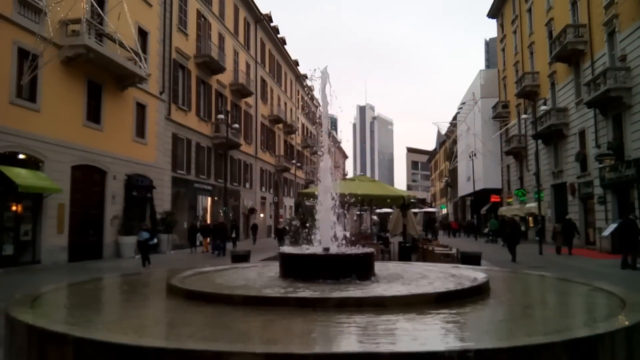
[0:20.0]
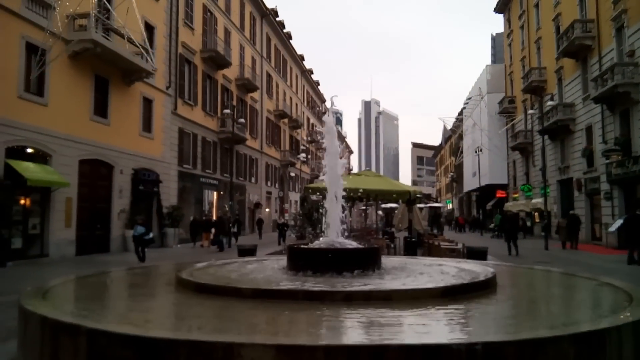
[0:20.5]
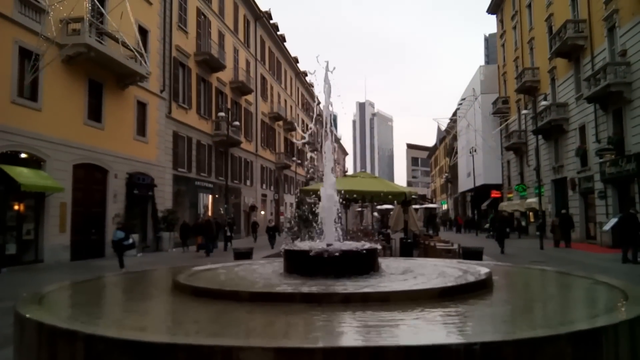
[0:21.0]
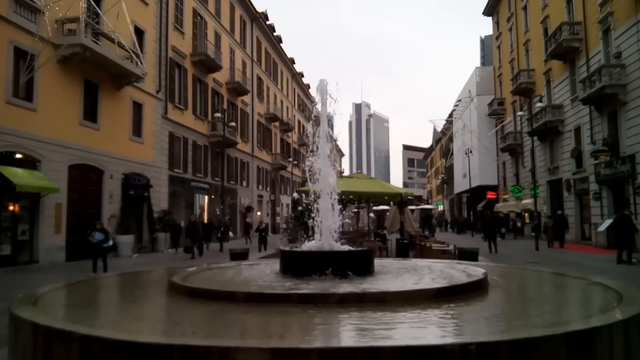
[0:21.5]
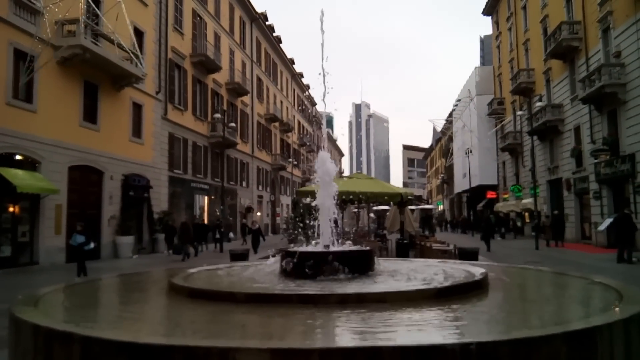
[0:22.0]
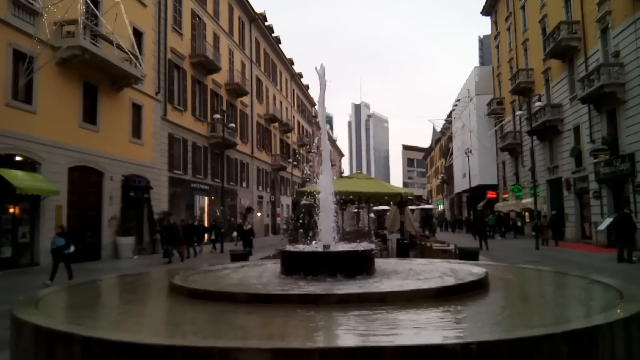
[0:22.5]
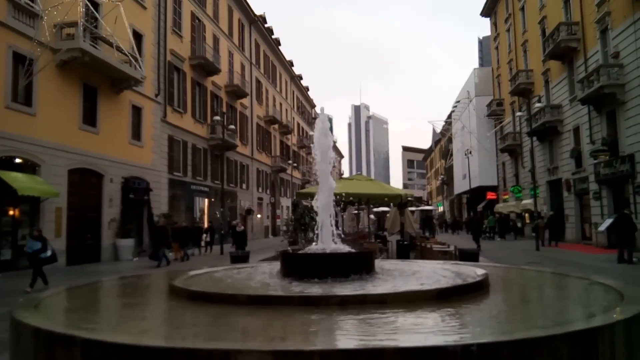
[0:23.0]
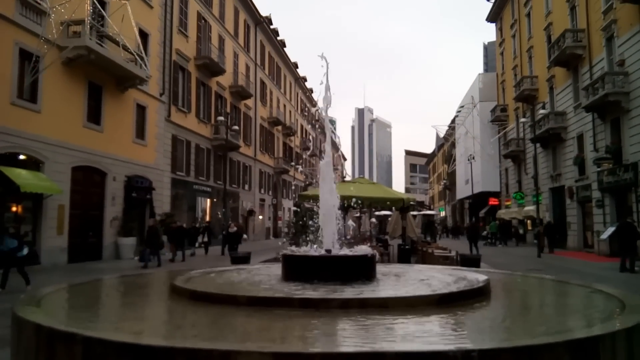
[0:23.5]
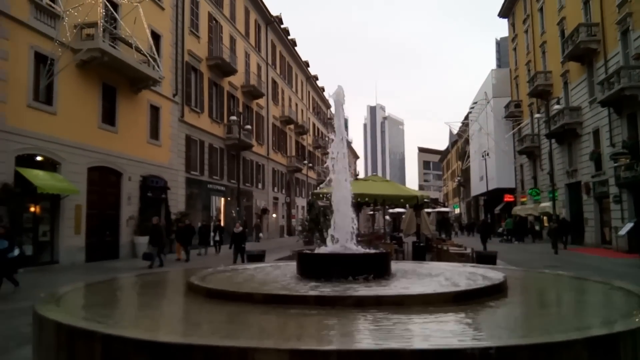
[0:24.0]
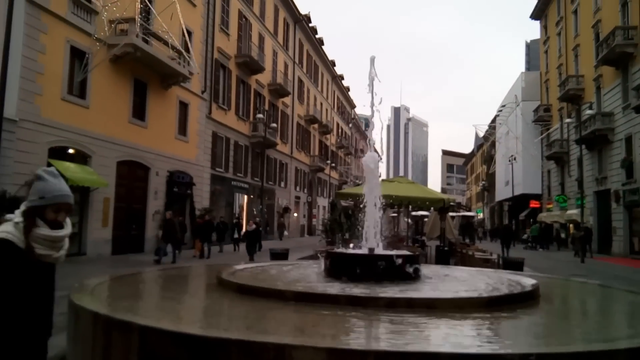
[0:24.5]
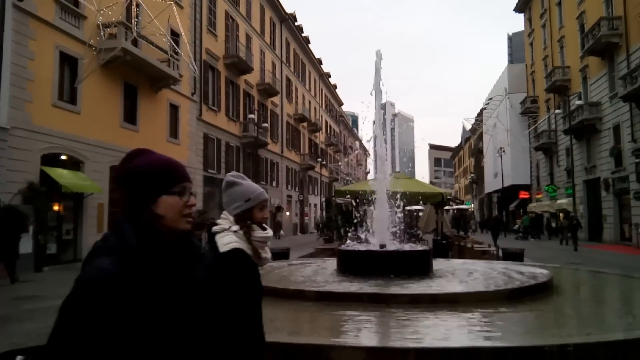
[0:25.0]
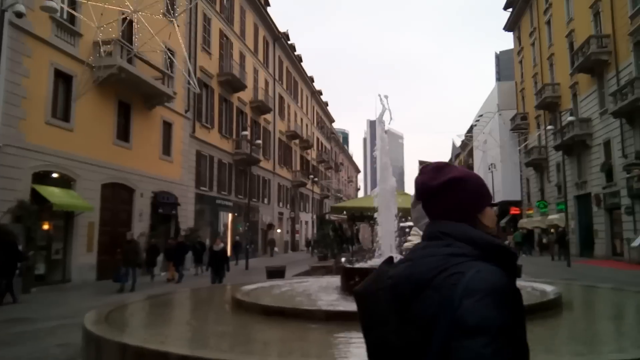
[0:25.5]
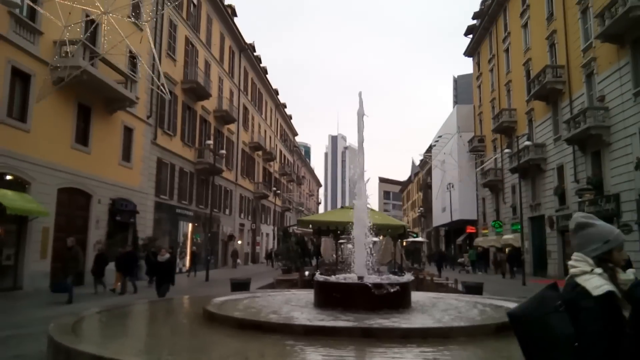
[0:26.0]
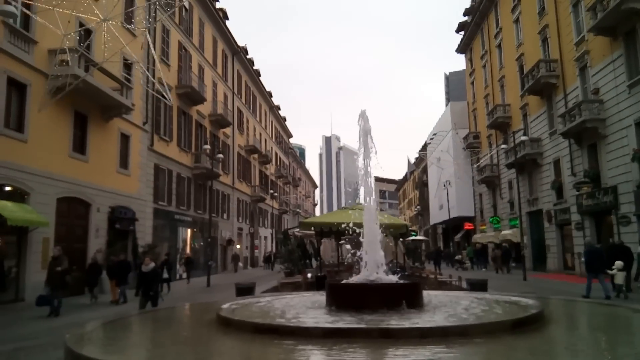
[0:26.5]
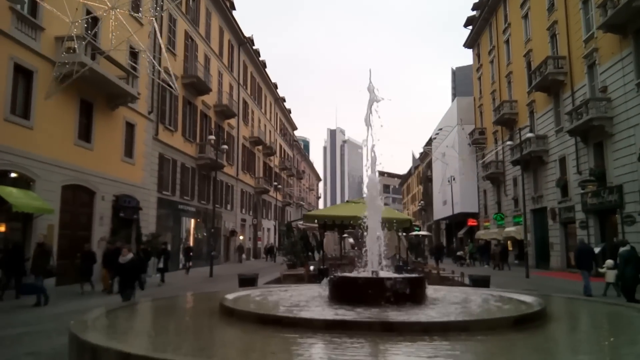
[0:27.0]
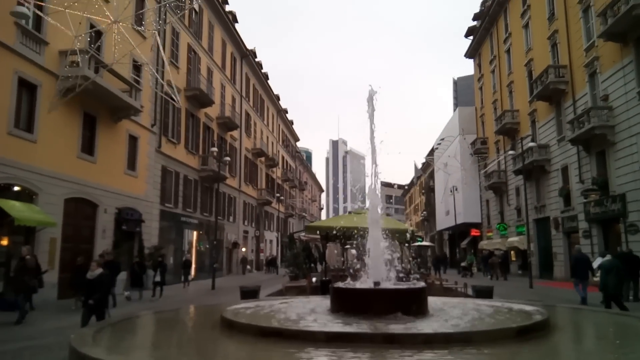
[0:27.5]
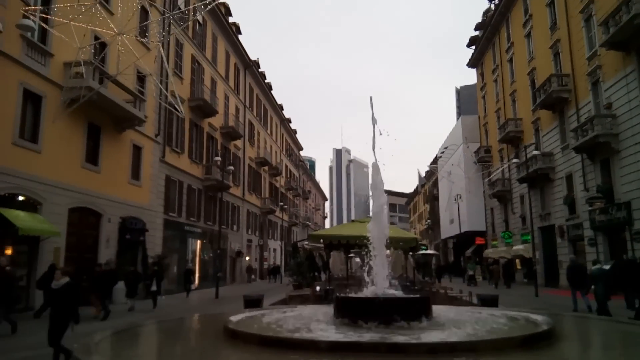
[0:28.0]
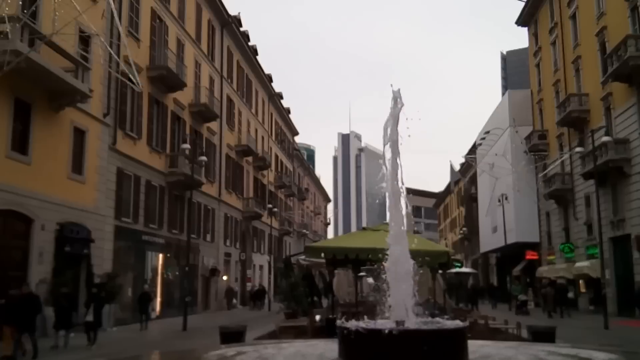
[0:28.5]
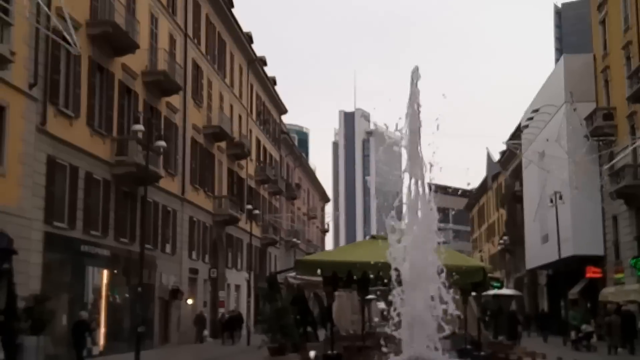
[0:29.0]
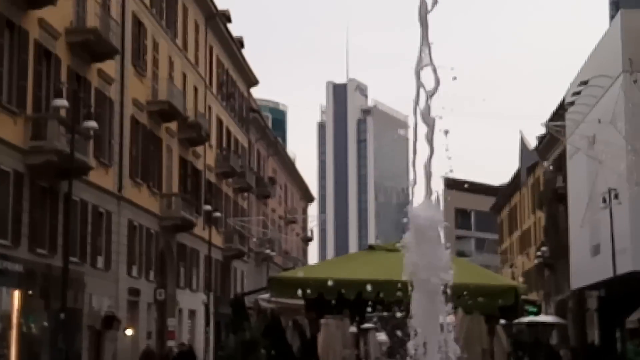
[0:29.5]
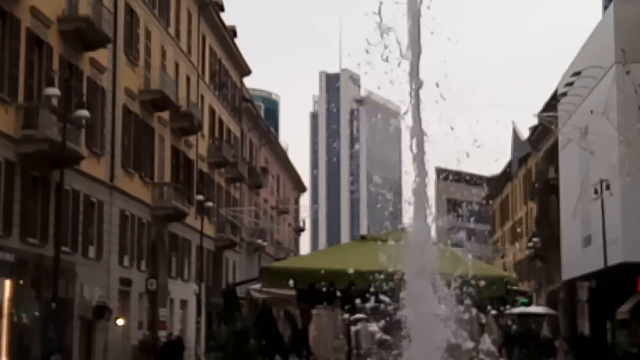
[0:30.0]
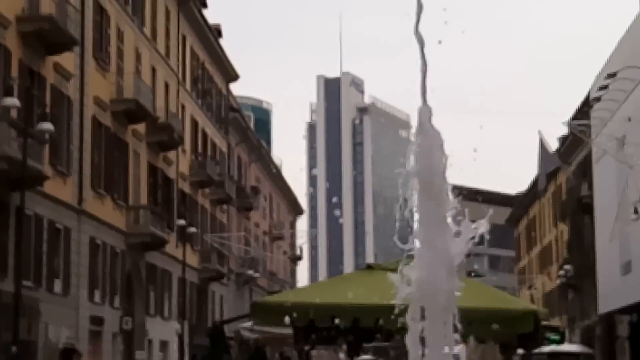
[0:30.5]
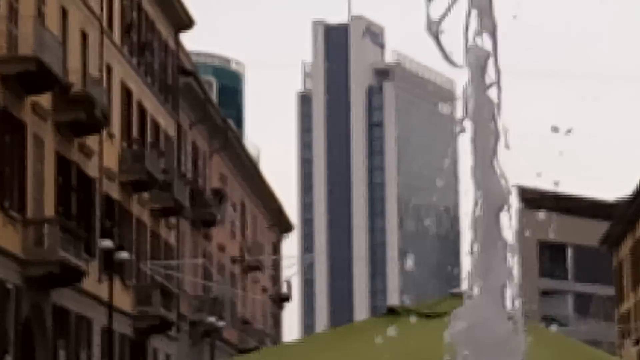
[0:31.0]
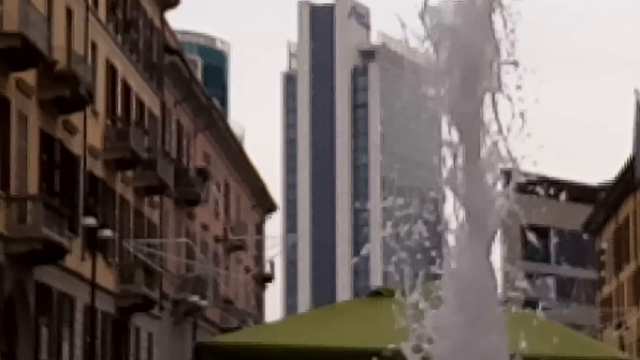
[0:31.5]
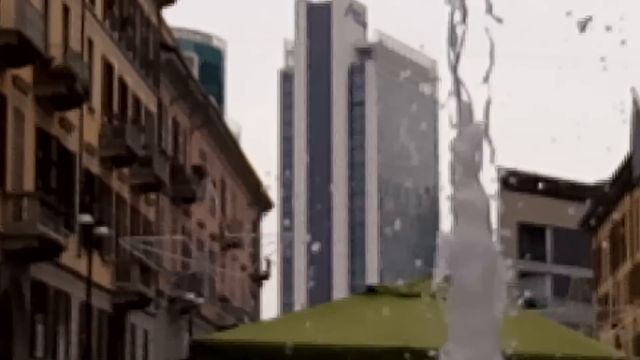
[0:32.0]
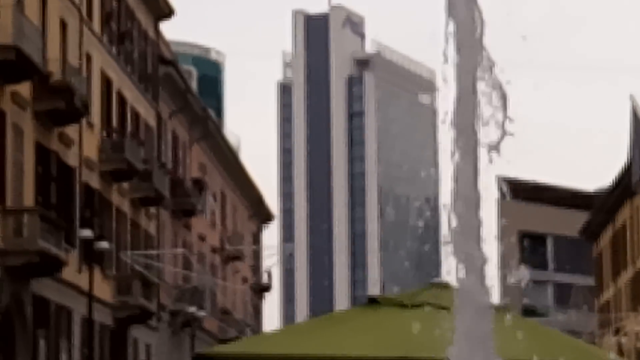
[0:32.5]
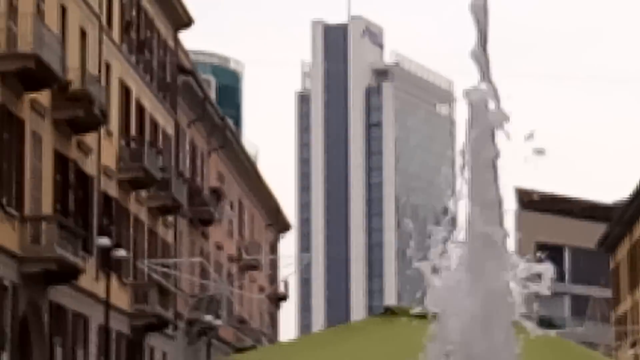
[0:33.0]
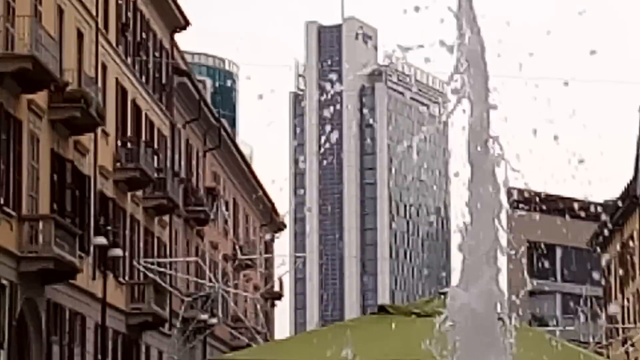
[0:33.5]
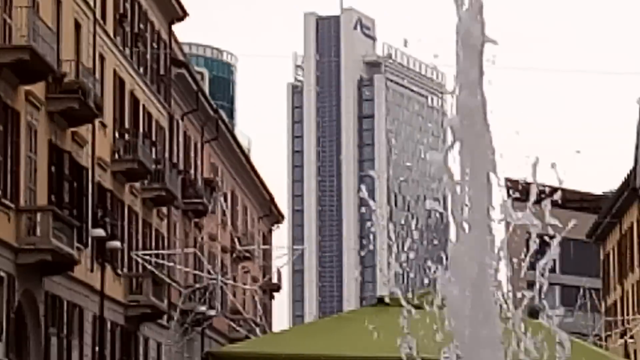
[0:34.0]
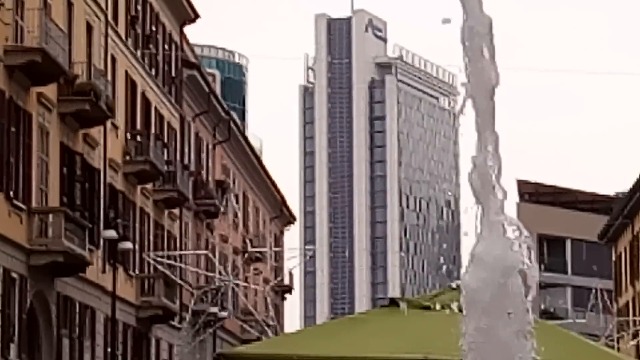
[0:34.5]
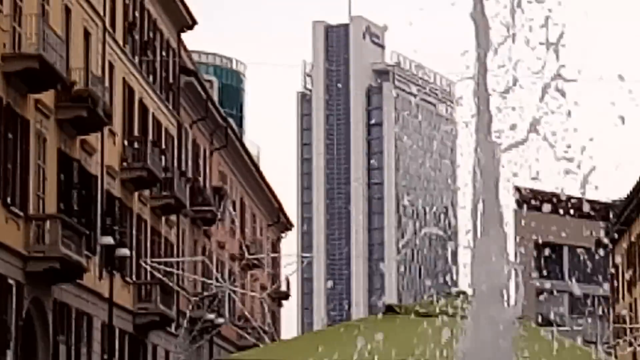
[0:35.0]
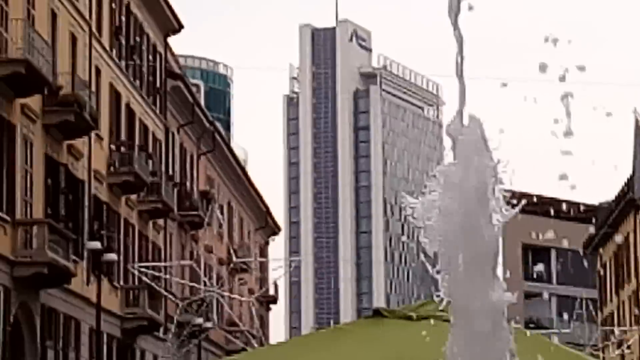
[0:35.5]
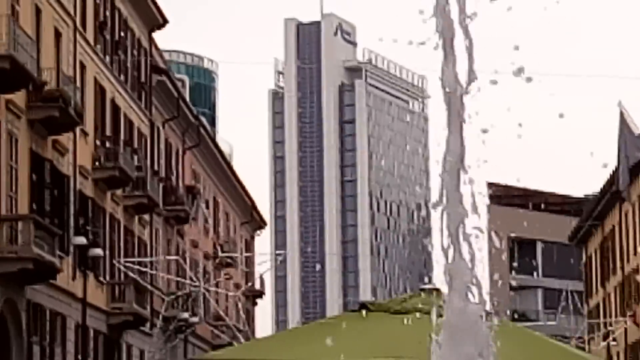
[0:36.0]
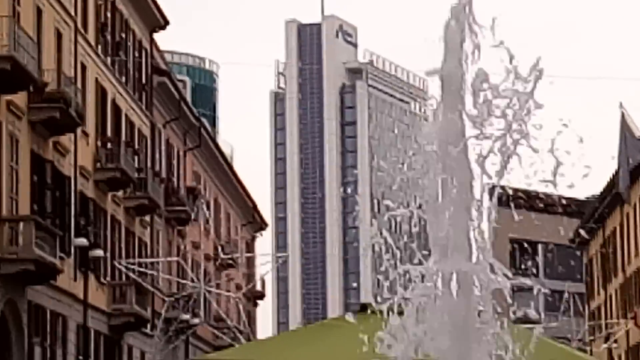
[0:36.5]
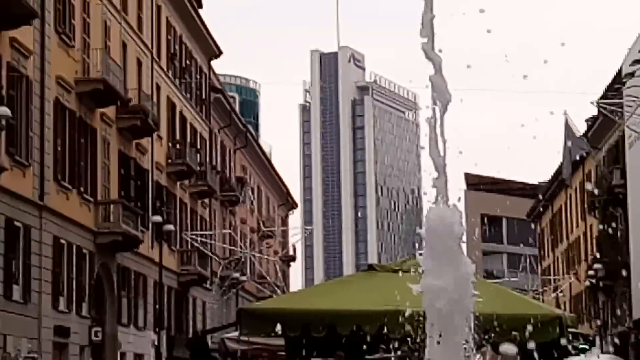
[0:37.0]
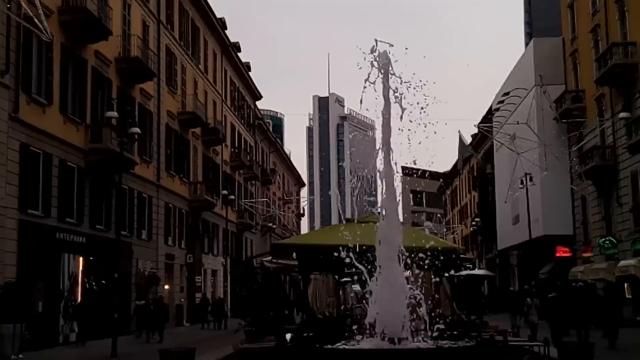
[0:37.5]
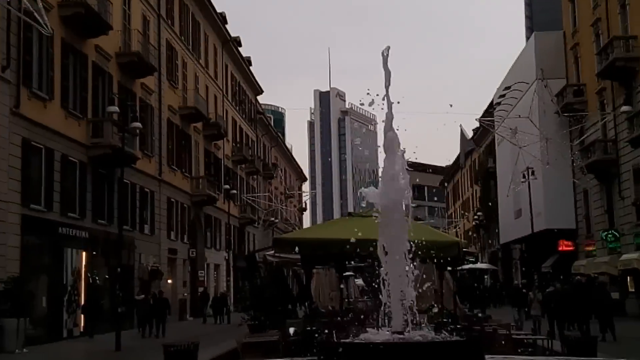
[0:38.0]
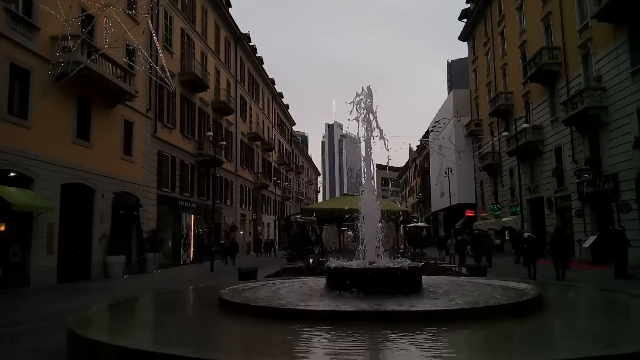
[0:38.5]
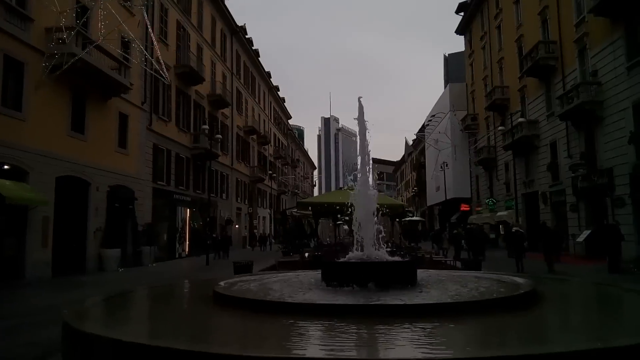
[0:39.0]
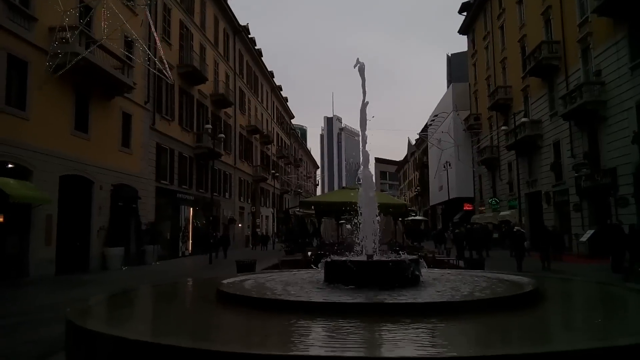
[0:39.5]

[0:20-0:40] The fountain behind the person recording is a large circle with a smaller circle inside it, and inside that a small circle with something like a podium from which the fountain comes out. The water spouts up in the middle in one long, tall, straight line, continuously and consistently. The person recording looks a little upwards at the buildings and then zooms in on a very modern-looking building that differs from the older, traditional-style buildings around it. It is tall, almost a skyscraper-type building, maybe a commercial or apartment building. While zoomed in, the camera adjusts slightly to focus on the building. The view then zooms back out to normal.